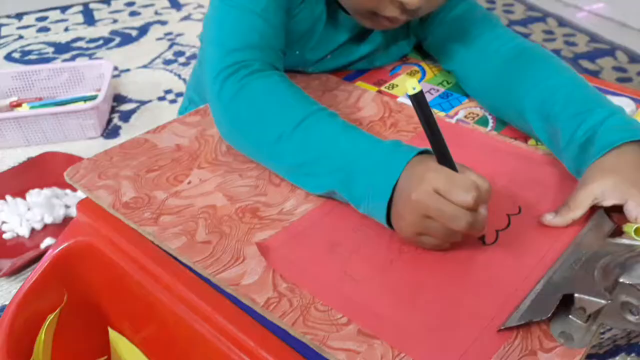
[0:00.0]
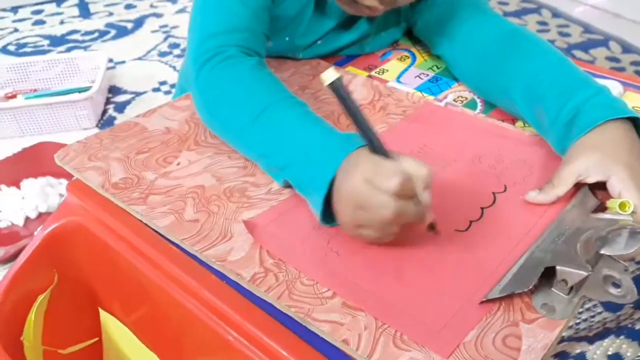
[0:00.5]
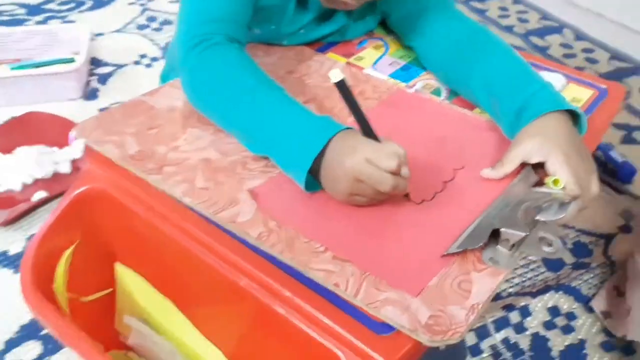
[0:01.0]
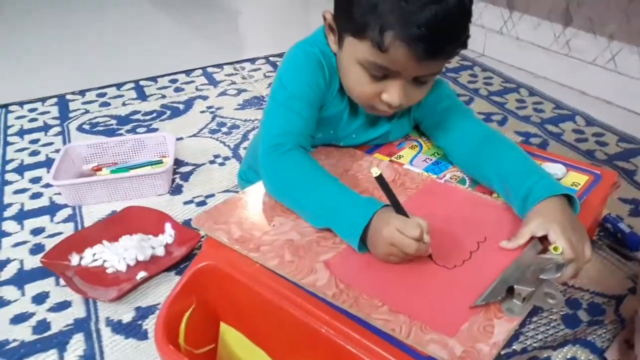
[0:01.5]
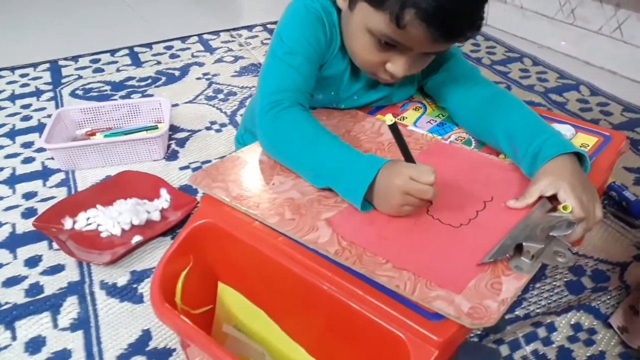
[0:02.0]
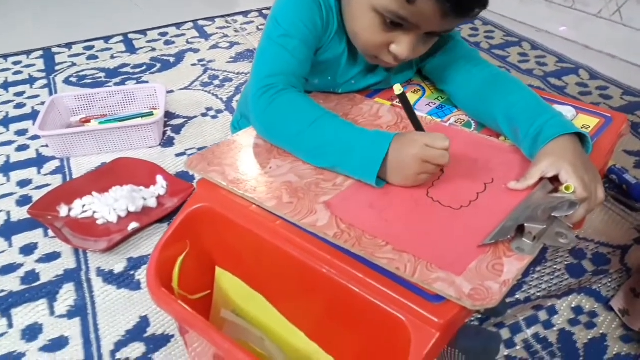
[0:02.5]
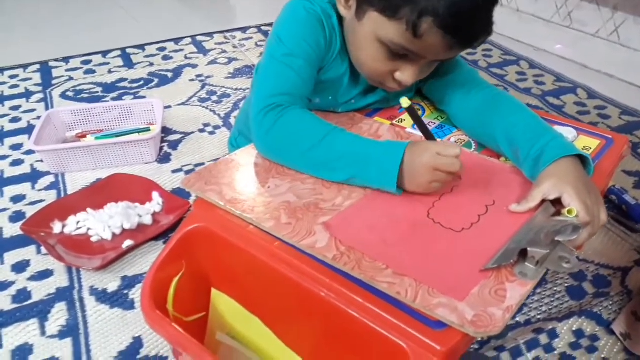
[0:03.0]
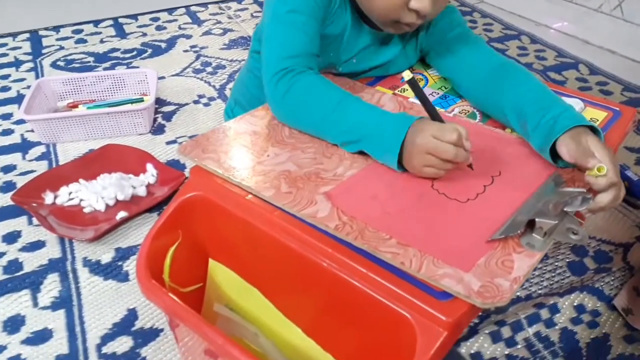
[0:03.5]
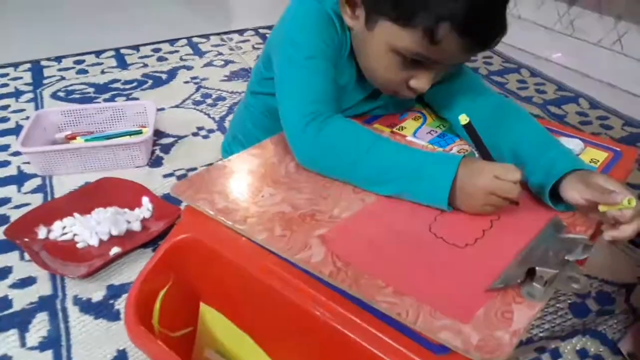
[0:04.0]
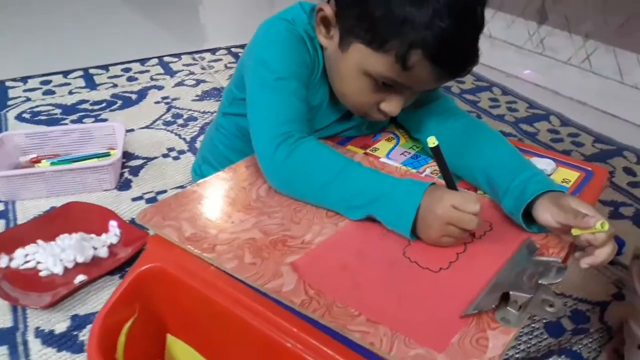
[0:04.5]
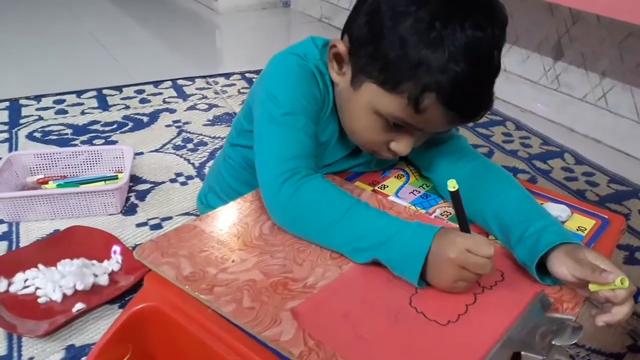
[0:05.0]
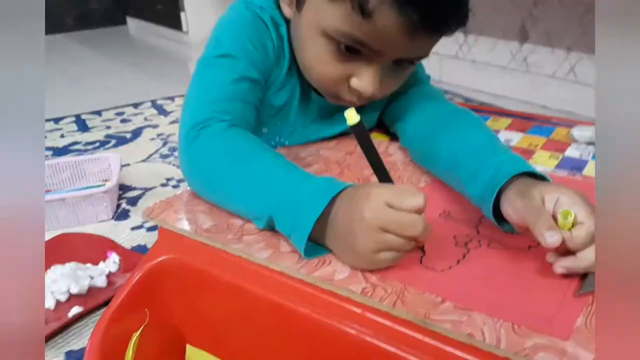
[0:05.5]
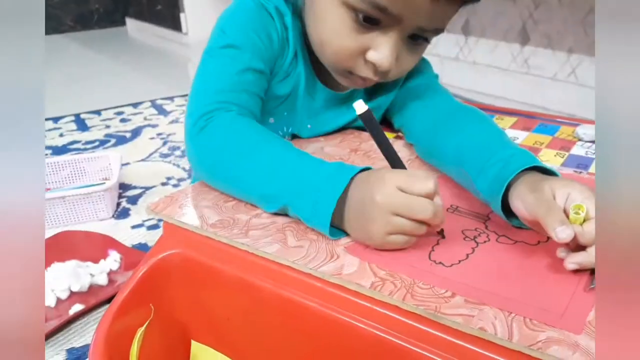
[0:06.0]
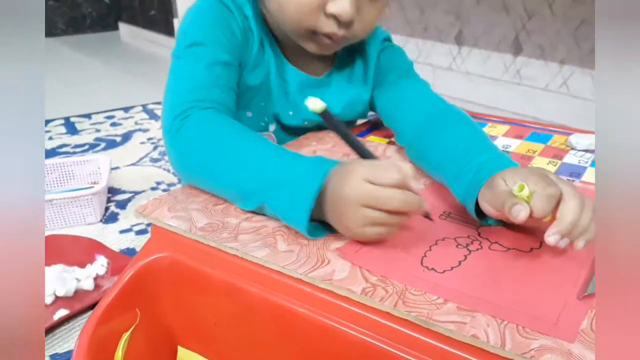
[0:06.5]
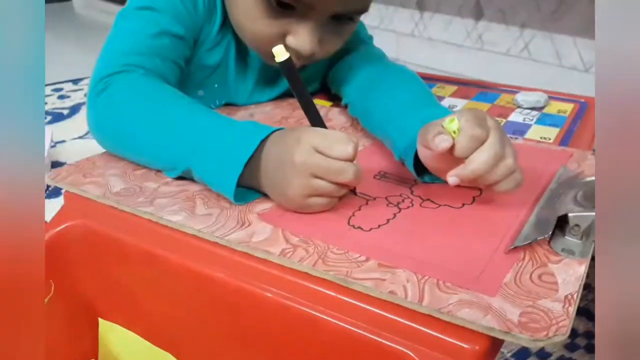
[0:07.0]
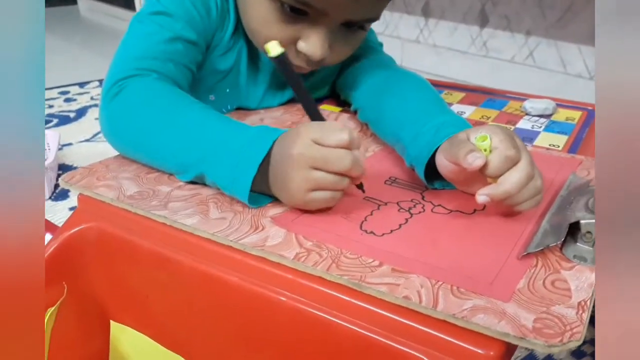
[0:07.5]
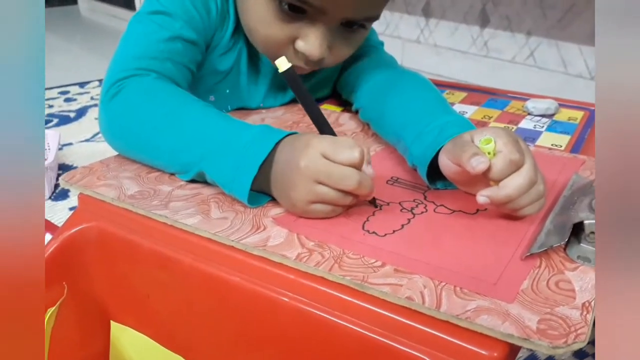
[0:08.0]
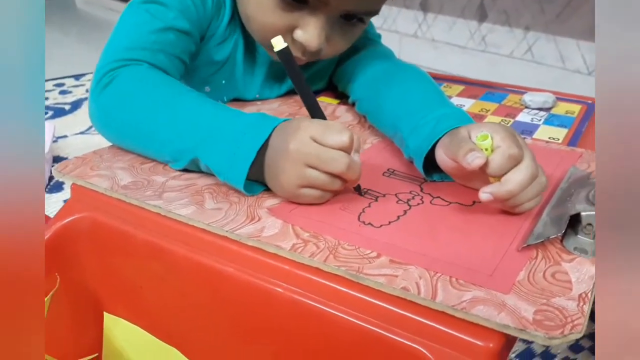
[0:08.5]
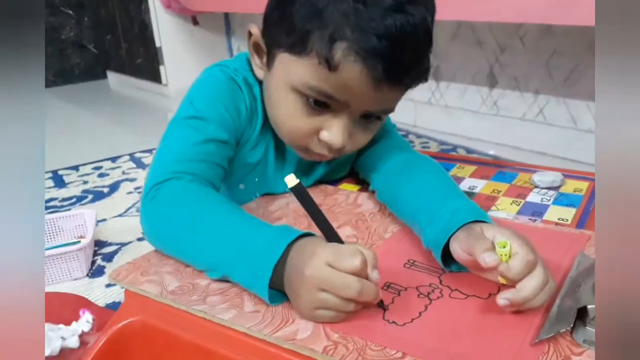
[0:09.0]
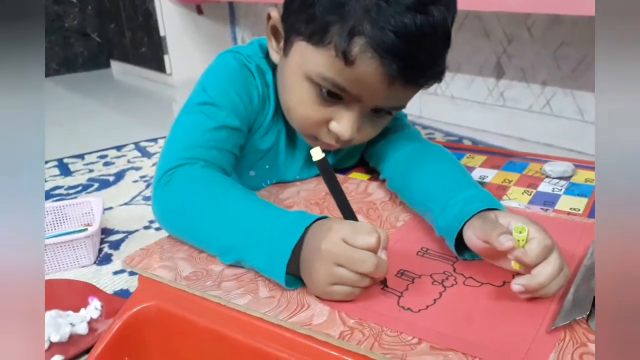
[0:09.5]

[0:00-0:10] A very fast time-lapse shows what appears to be a boy drawing some kind of animals on a red sheet of construction paper attached to a pink, marble-looking clipboard. He appears to be drawing in some kind of black marker or sharpie, and he appears to draw two different sheep before the shot ends. The boy wears a long-sleeve teal shirt and sits on a white and blue rug. Right behind him there is a bucket of markers and a white bucket, as well as a red plate with some kind of white substance.